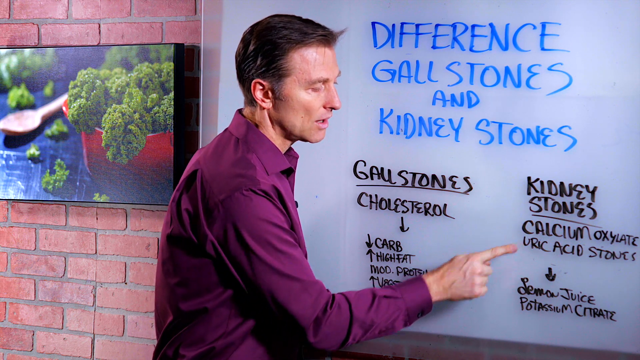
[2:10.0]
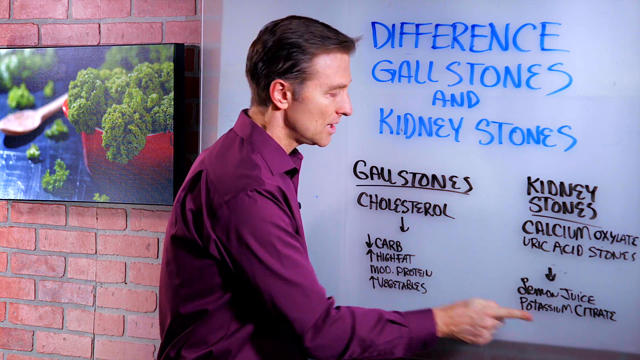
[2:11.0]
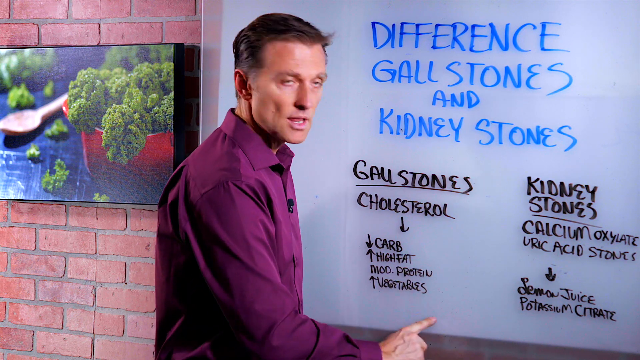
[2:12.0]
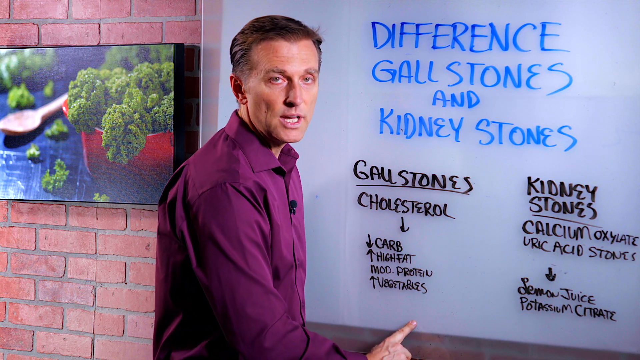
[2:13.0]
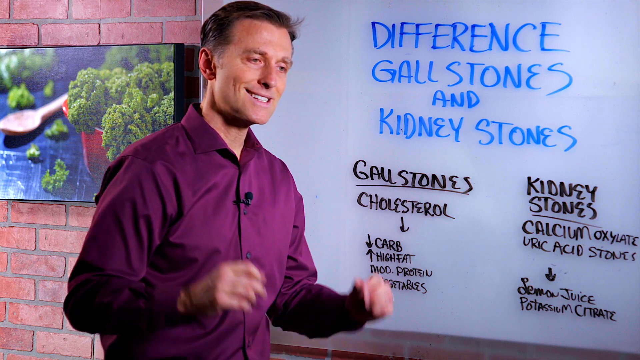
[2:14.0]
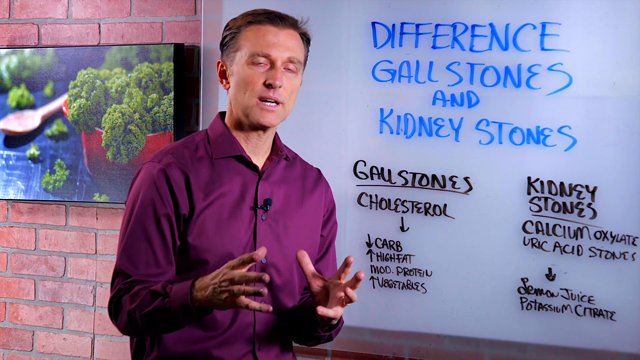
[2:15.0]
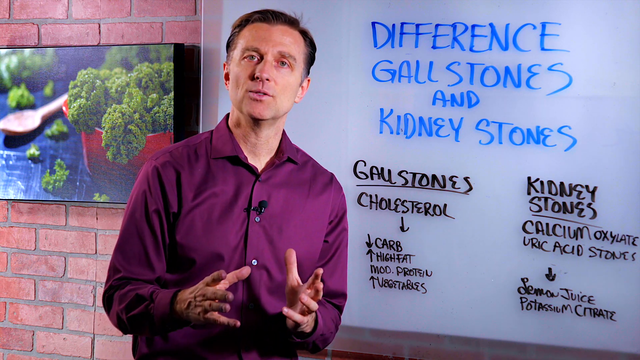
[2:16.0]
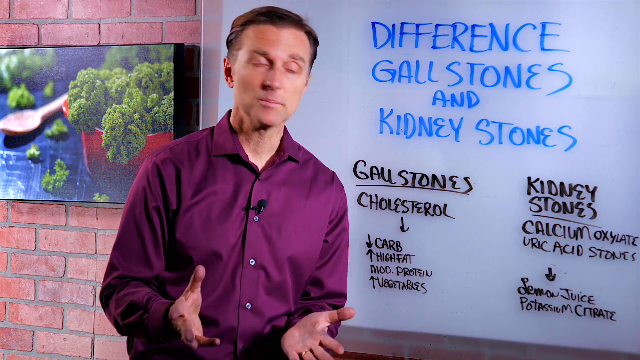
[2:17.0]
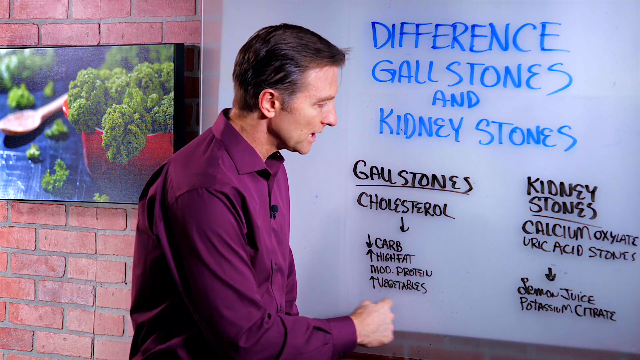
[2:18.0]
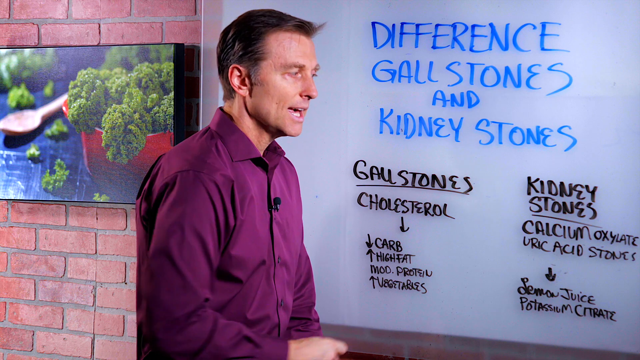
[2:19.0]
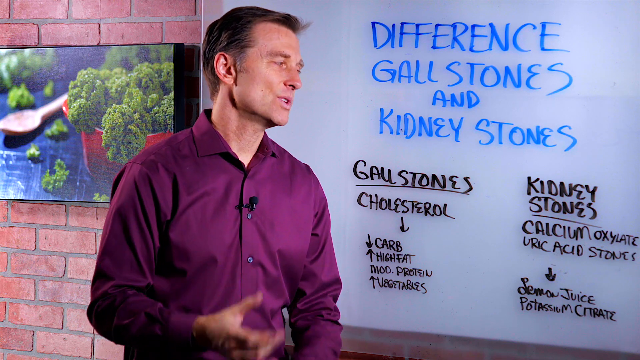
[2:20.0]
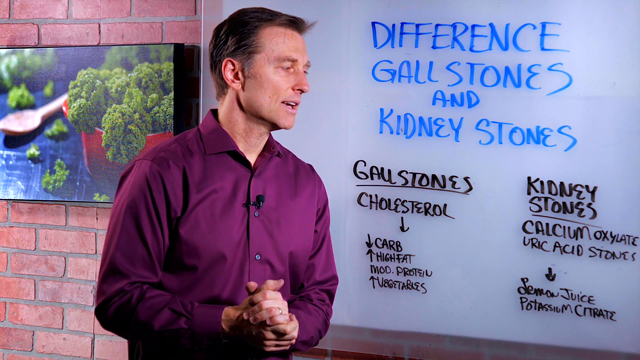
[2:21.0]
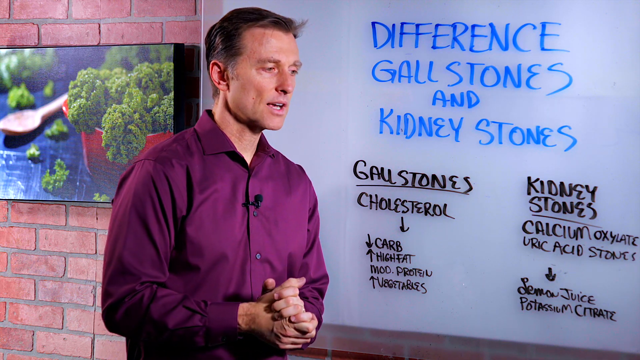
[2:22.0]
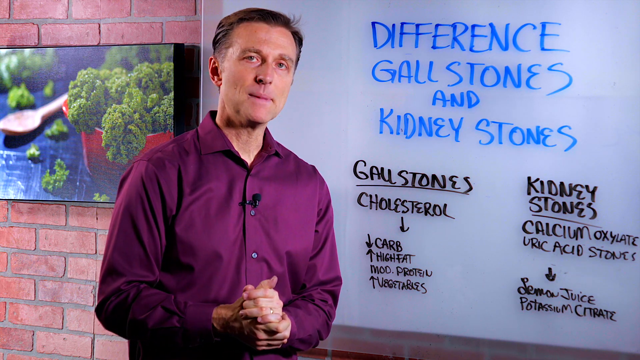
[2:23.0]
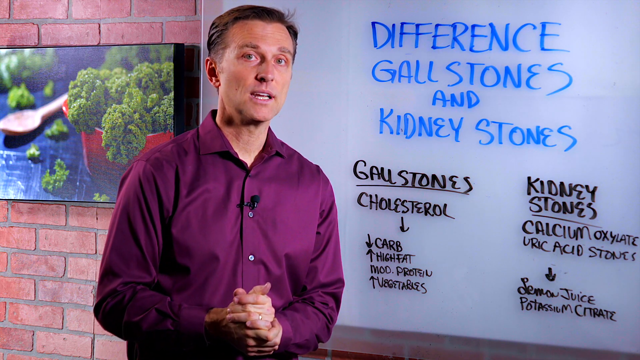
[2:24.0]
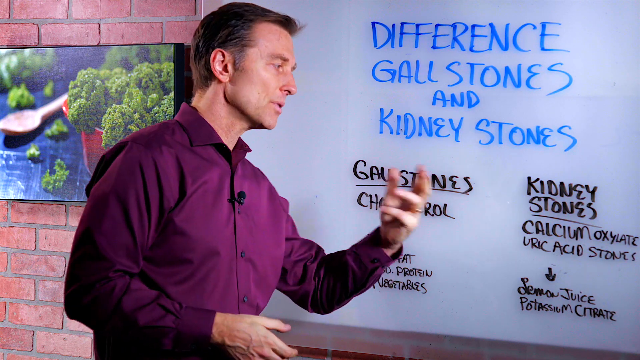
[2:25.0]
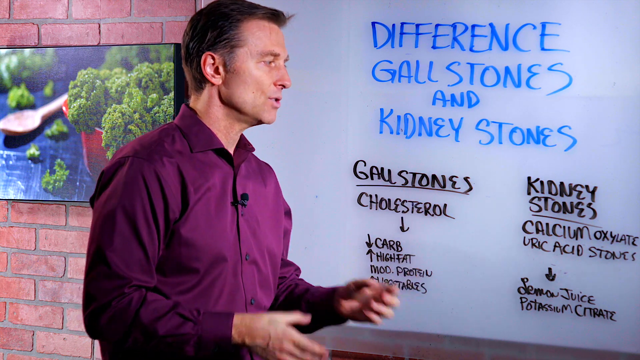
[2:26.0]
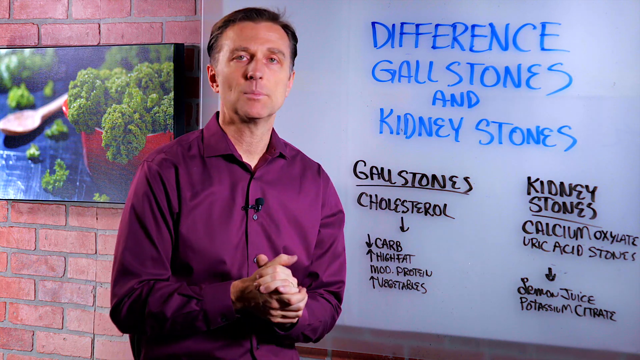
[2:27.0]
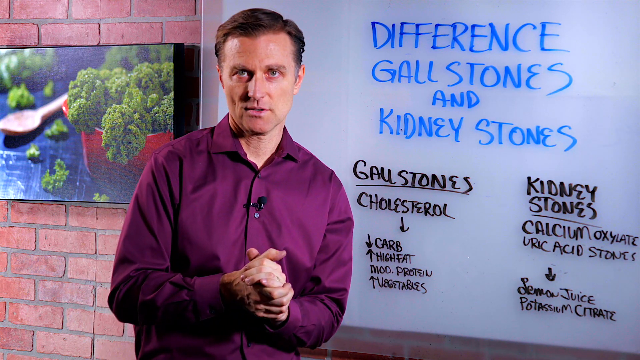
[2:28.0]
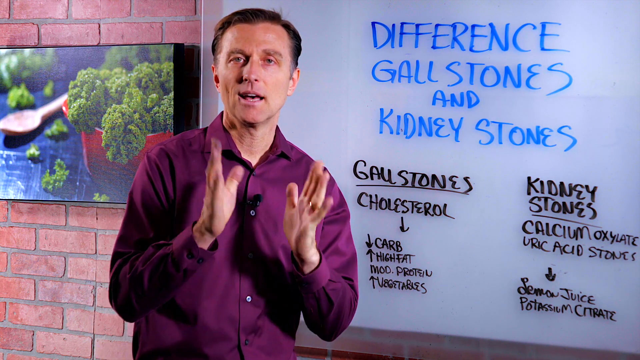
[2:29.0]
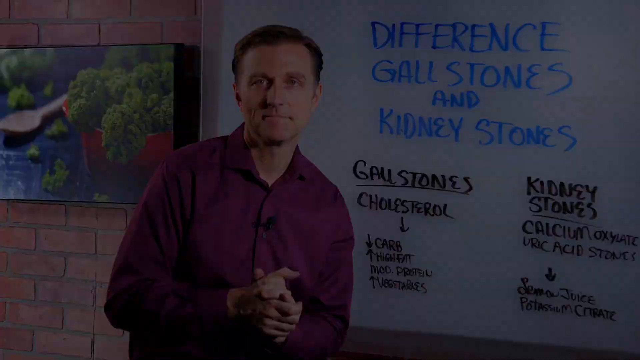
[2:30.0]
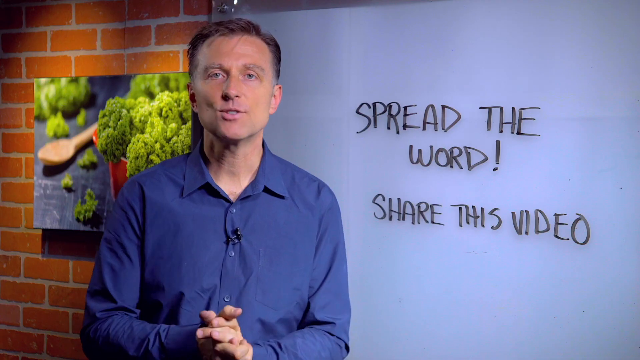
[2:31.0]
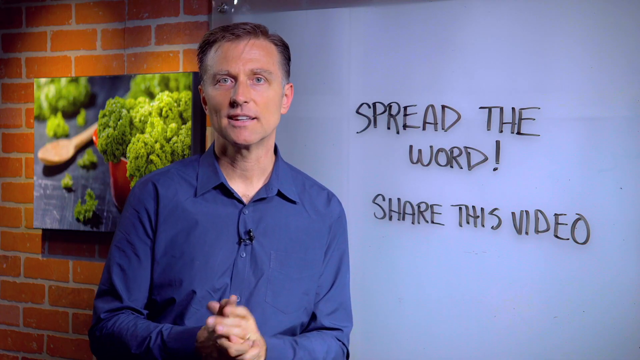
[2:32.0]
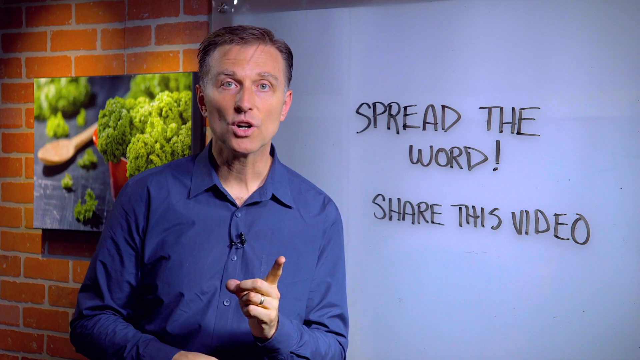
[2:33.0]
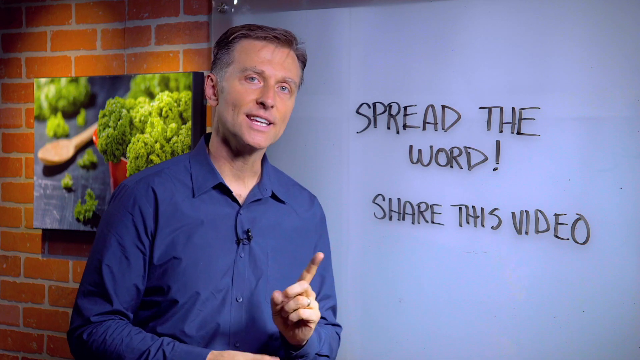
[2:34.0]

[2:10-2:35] The man keeps speaking while standing in front of his whiteboard, with the red brick wall to the left holding a piece of wall art that shows a green vegetable inside a red pot. Facing the whiteboard, he has his finger pointed toward "uric acid stones", then brings his right index finger down to "potassium citrate" and underlines those words. He does the same under "up vegetables", moving his right index finger back and forth under the words. He then faces his palms together with his fingers slightly curled in, as if holding a basketball, and moves this gesture up and down as he speaks and looks at the camera. He points with his right index finger underneath "vegetables" and clasps his hands together in front of his abdomen. The scene changes to the man now wearing a blue collared button-down long-sleeve shirt, with the microphone still pinned between his second and third buttons. The red brick wall is to his left and the whiteboard is behind his right shoulder on the left. On the whiteboard, in black marker and all capitals, is written "SPREAD THE WORD! SHARE THIS VIDEO". He has his hands clasped in front of his abdomen as he speaks toward the camera.